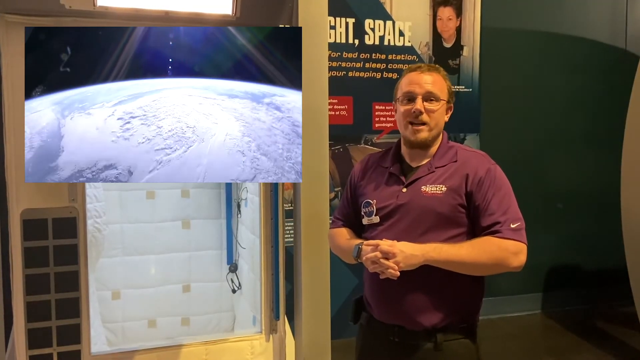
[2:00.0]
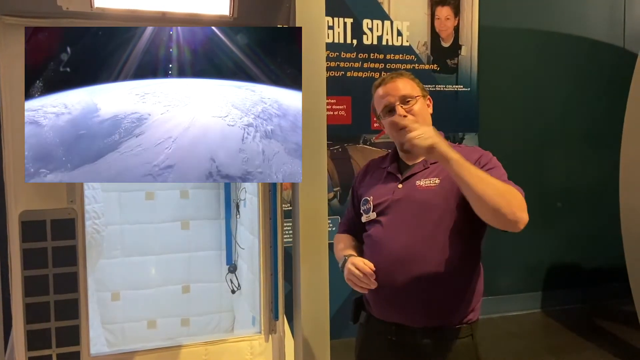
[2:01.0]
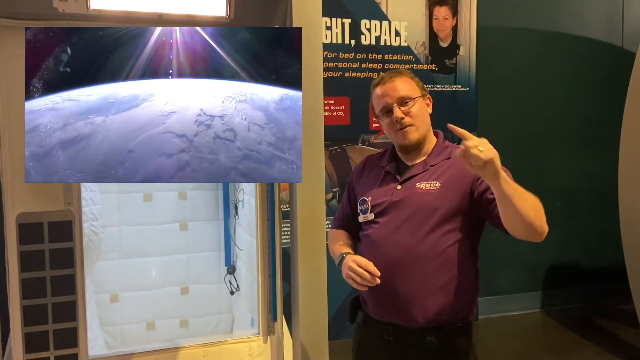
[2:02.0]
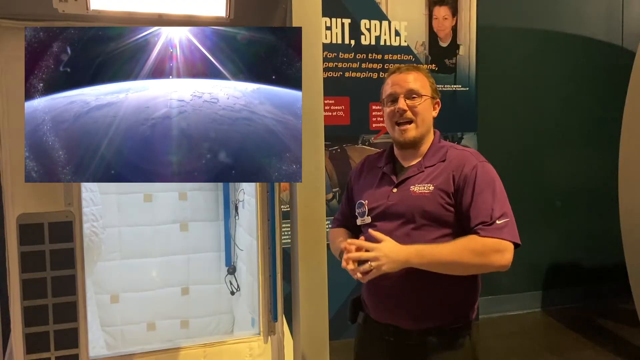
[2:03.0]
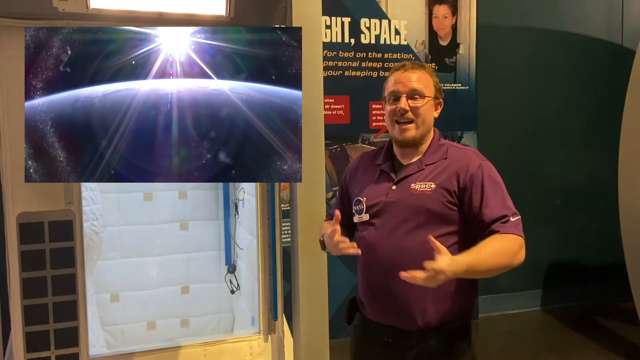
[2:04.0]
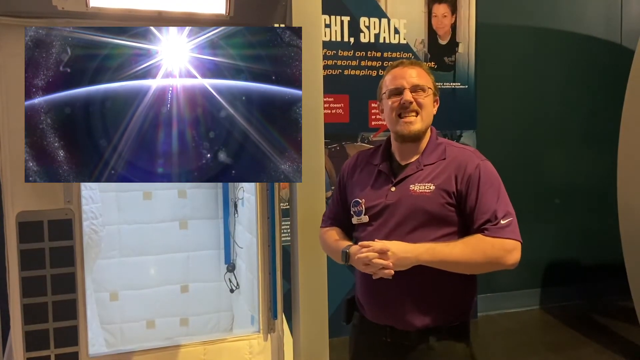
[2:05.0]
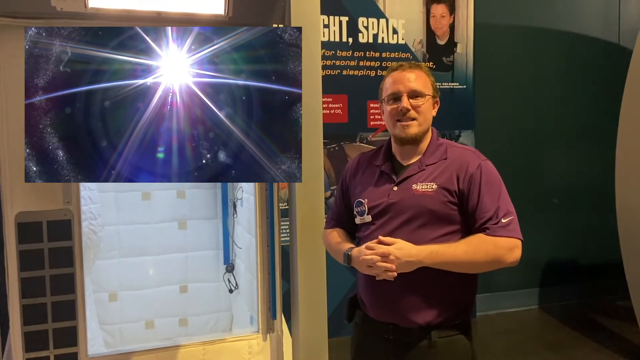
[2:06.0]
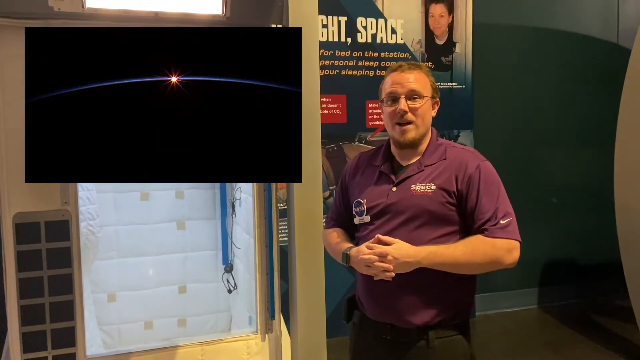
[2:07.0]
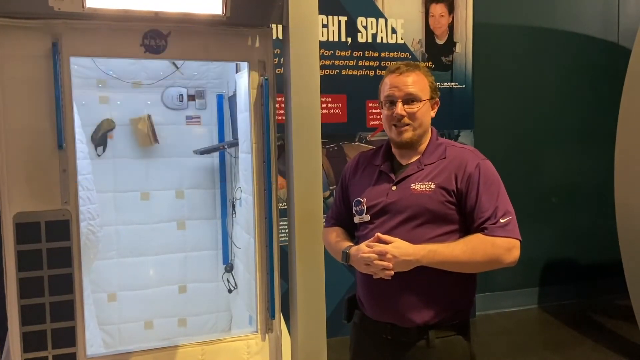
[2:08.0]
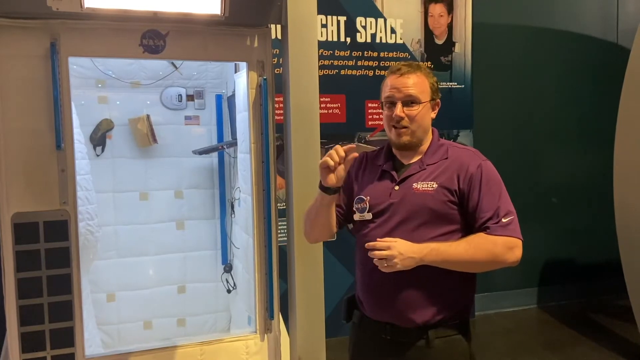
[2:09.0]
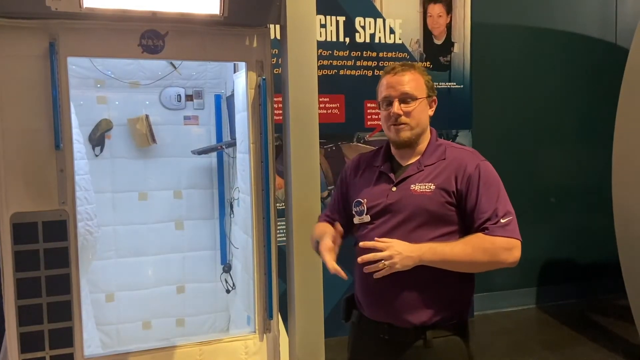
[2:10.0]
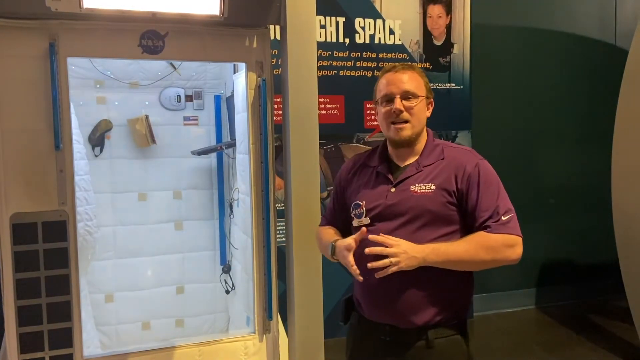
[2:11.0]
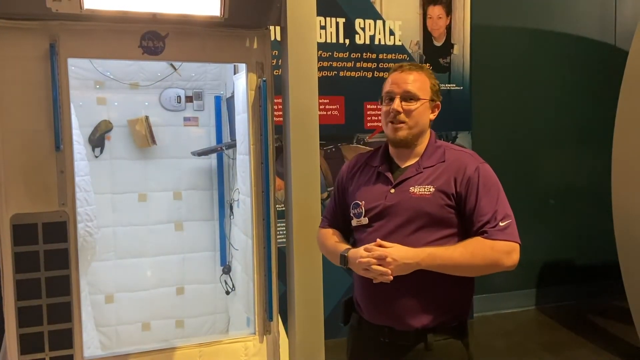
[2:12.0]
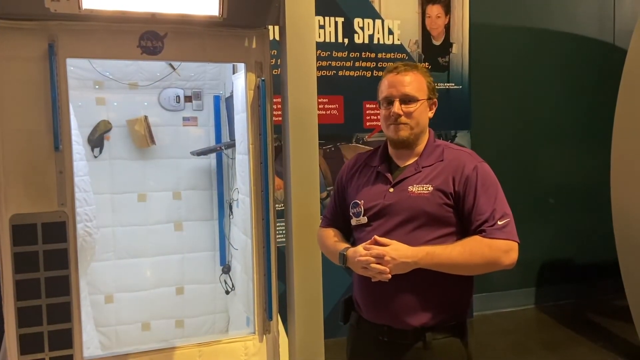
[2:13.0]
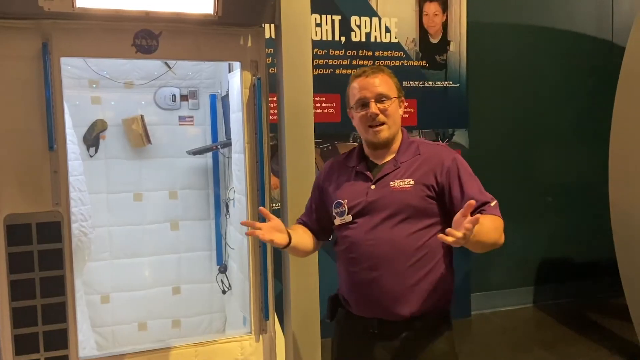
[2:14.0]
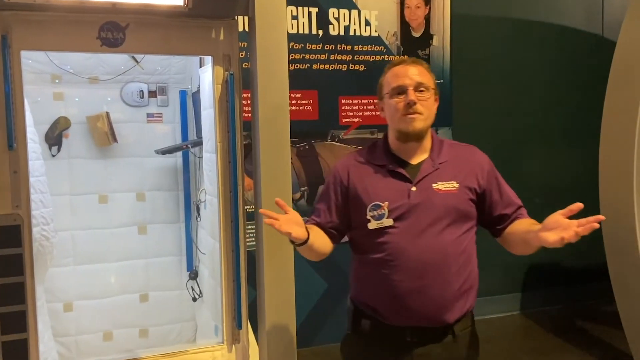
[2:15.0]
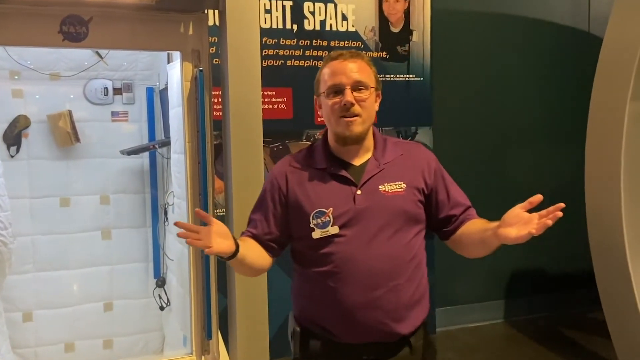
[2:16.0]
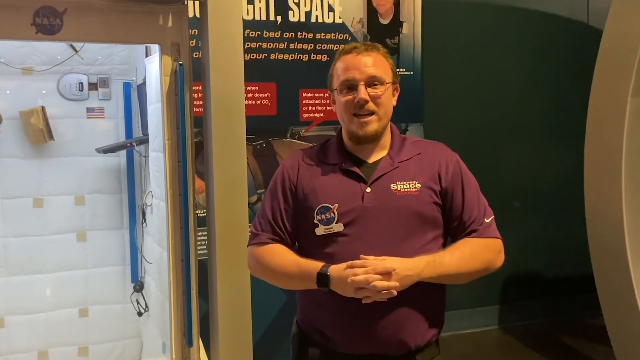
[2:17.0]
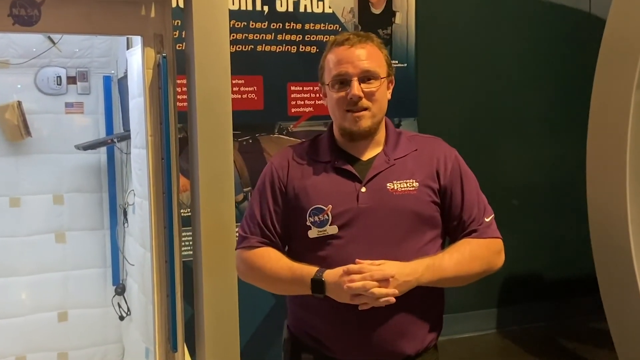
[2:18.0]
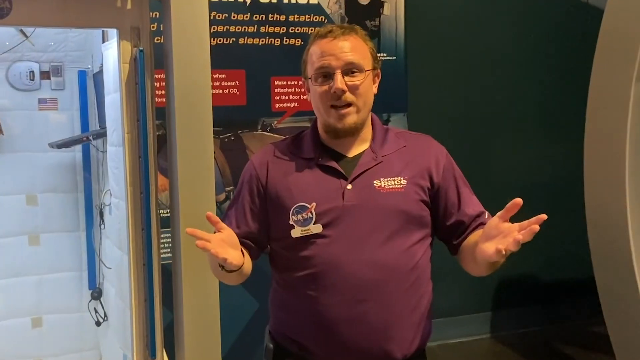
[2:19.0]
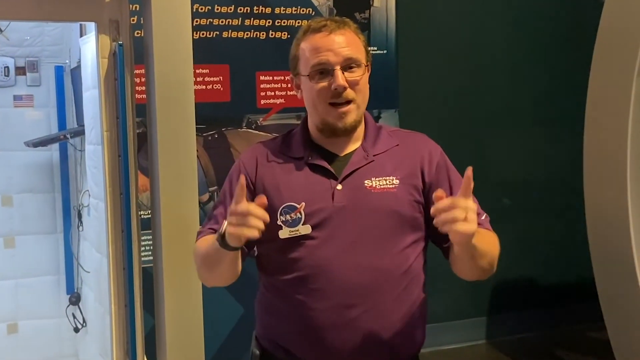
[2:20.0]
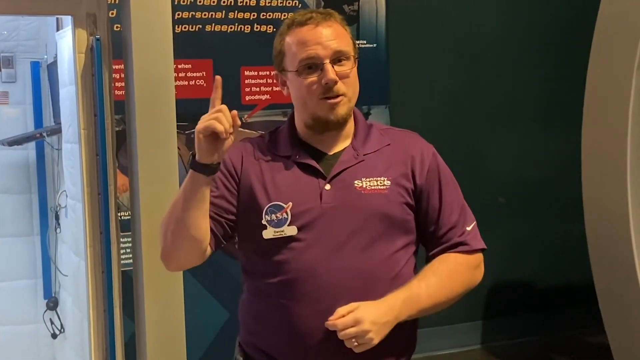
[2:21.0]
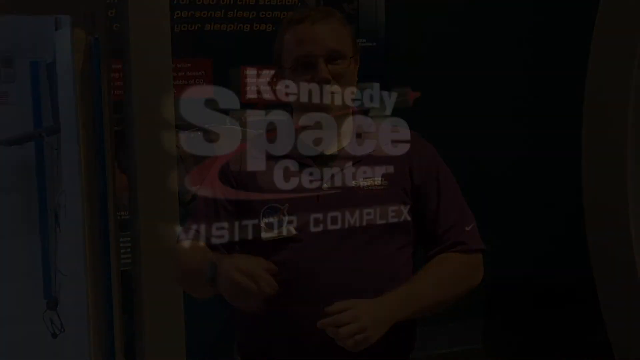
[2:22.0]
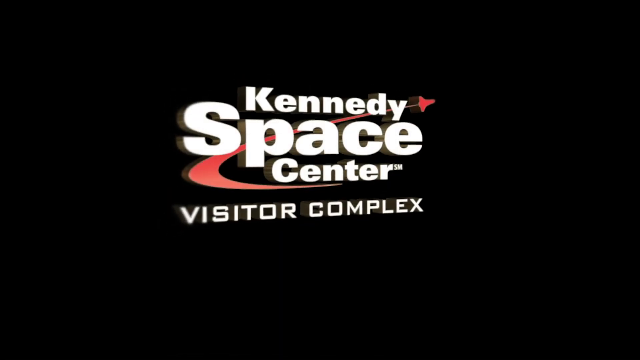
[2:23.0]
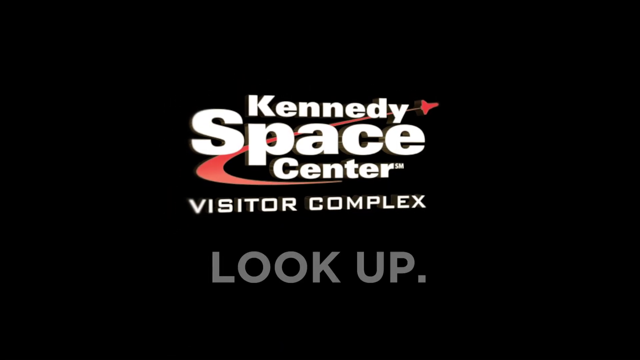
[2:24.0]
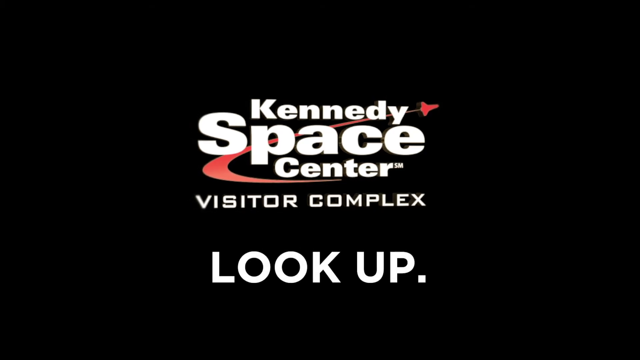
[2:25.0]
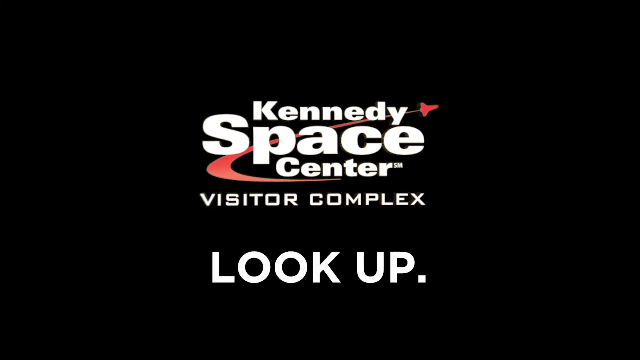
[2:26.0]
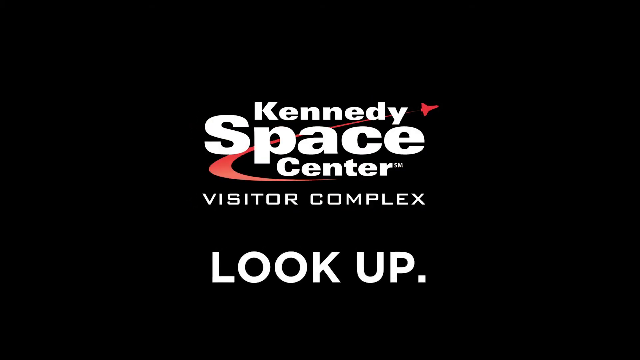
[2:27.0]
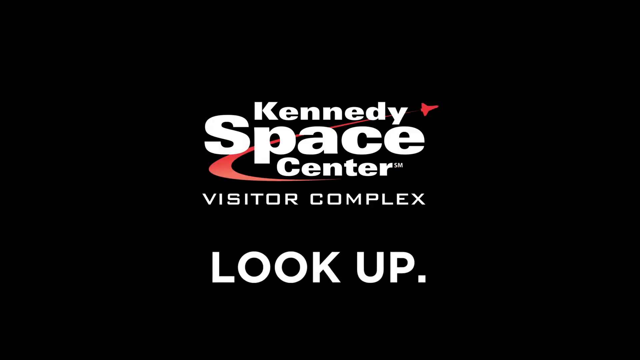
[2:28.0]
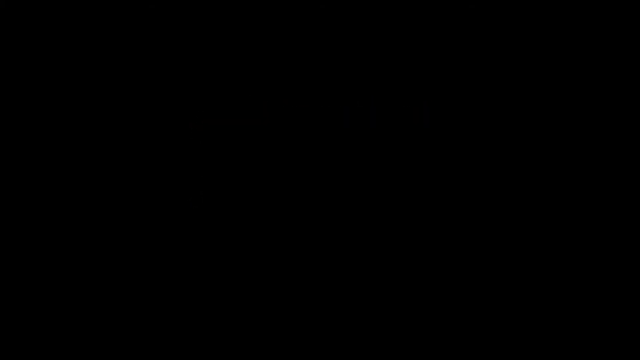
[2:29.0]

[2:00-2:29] The man, still in the same place, continues his presentation. A video plays in the top left for a couple of seconds, showing planet Earth horizontal to the camera as the camera pans back and away, orbiting from the light side to the dark side, while the Sun goes down and out of view. The man then continues, making a gesture with his right hand over his face, almost like a mask. Finally, the text "Kennedy Space Center visitor complex" appears.